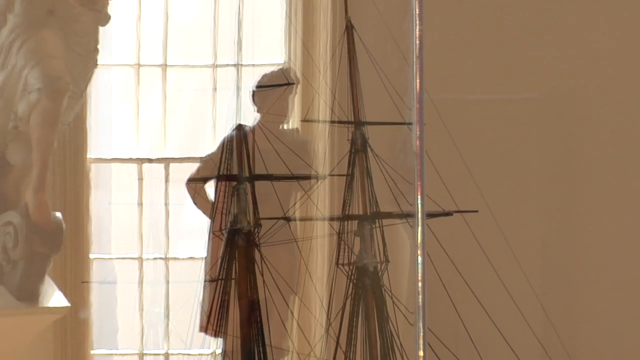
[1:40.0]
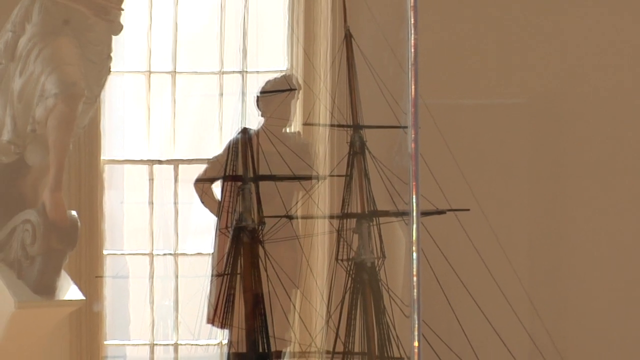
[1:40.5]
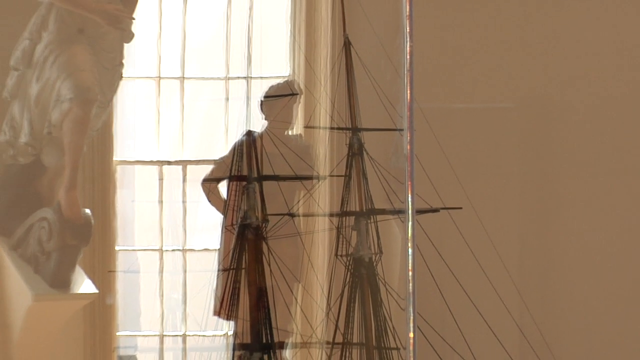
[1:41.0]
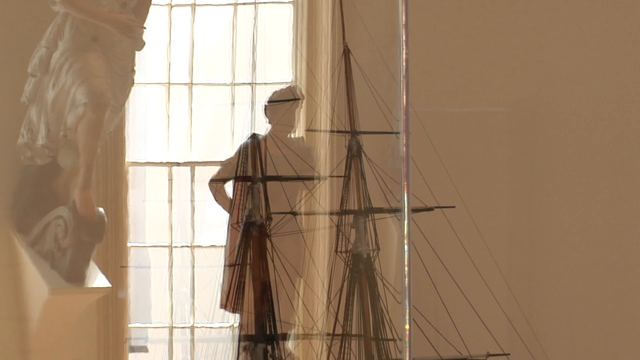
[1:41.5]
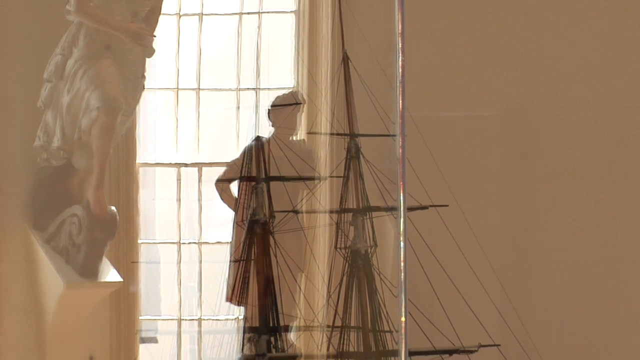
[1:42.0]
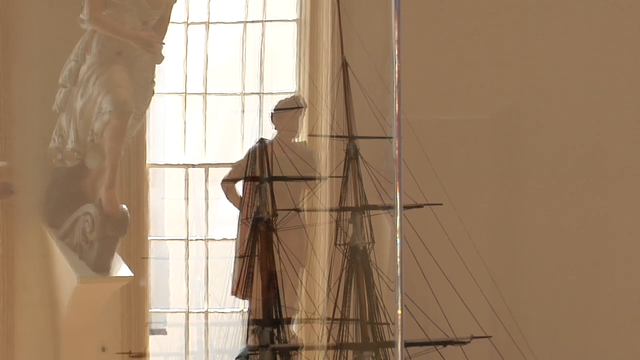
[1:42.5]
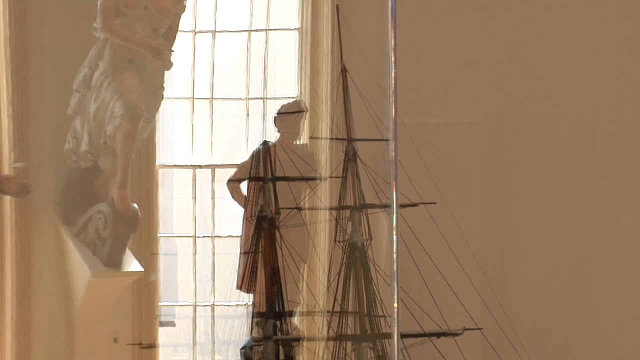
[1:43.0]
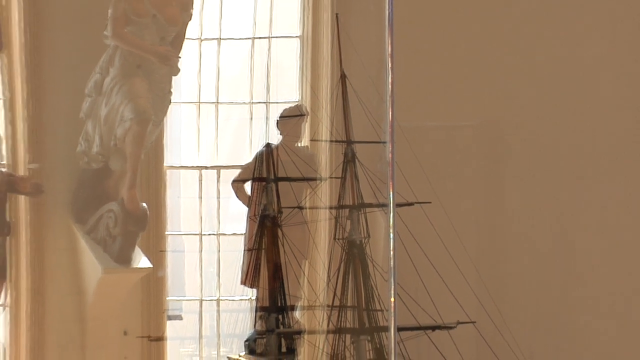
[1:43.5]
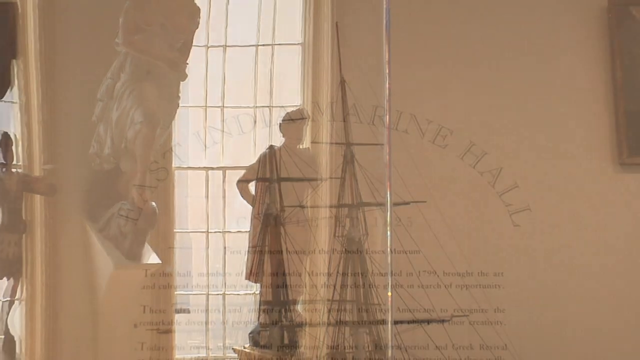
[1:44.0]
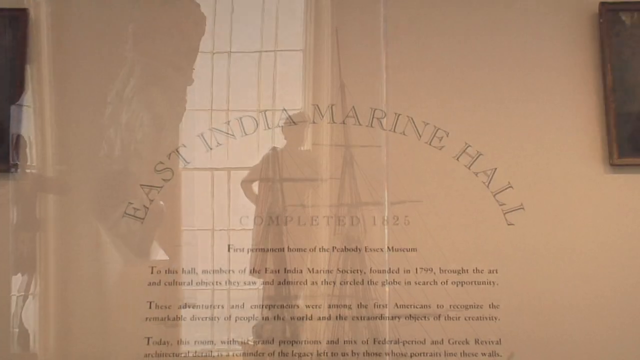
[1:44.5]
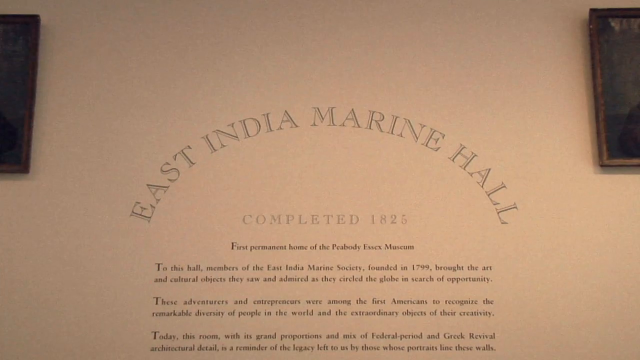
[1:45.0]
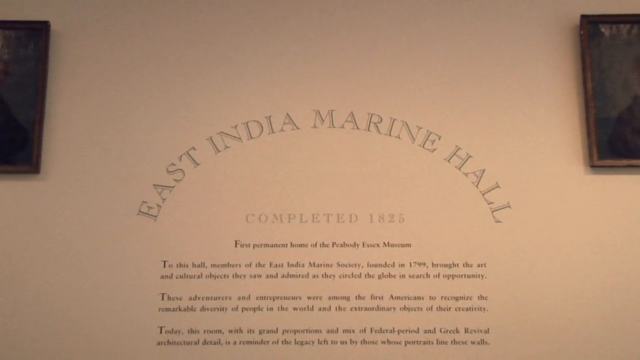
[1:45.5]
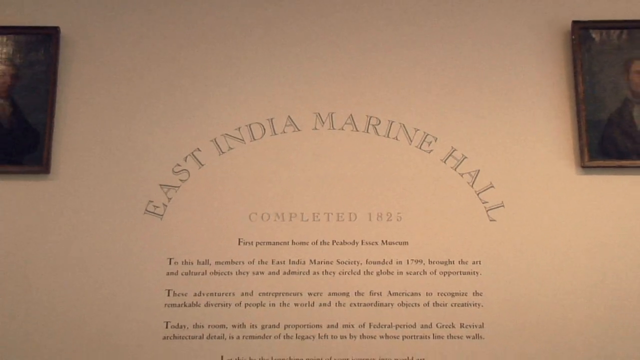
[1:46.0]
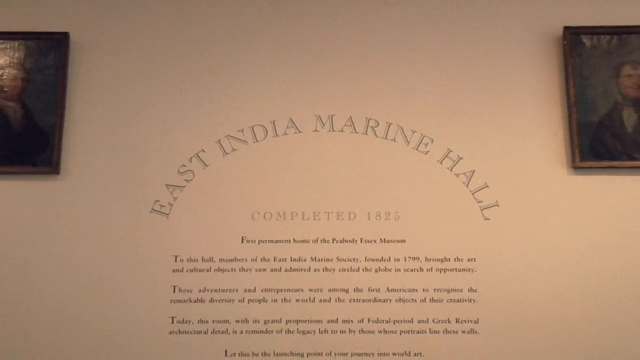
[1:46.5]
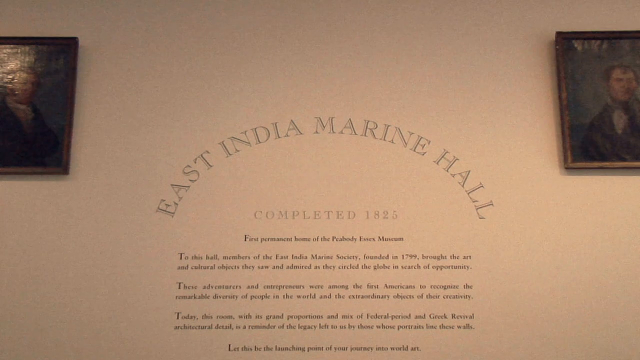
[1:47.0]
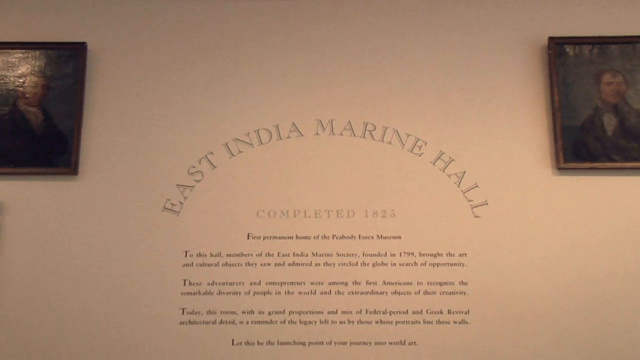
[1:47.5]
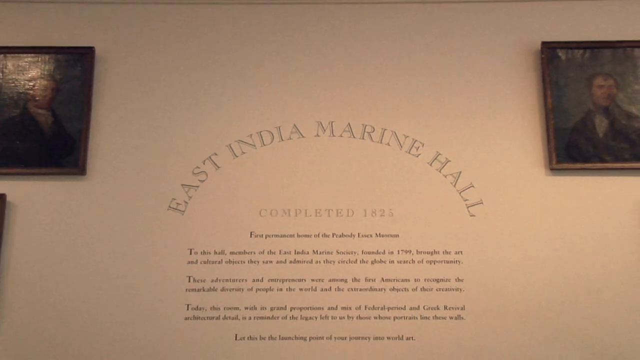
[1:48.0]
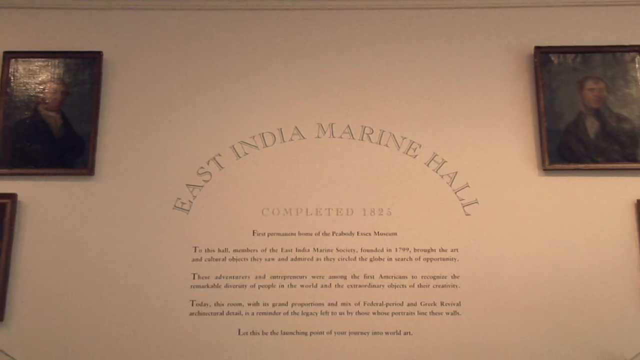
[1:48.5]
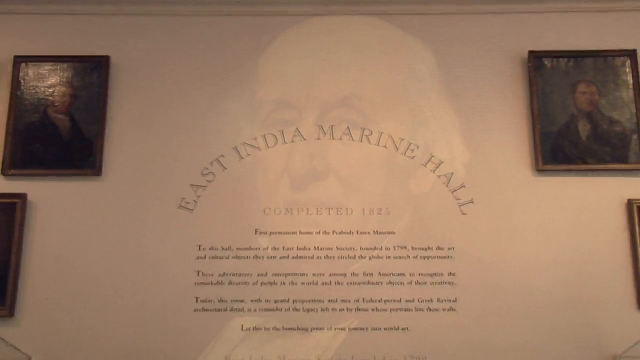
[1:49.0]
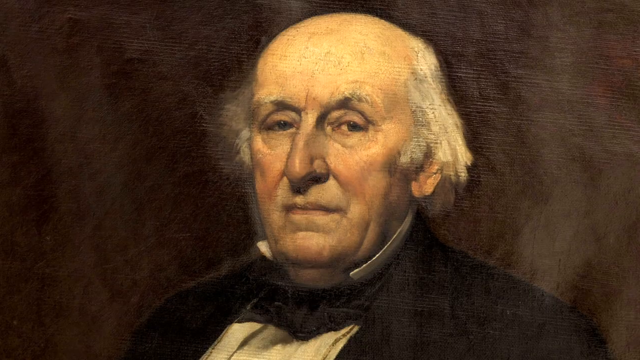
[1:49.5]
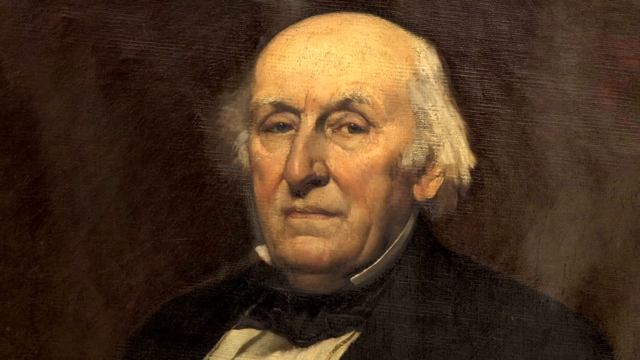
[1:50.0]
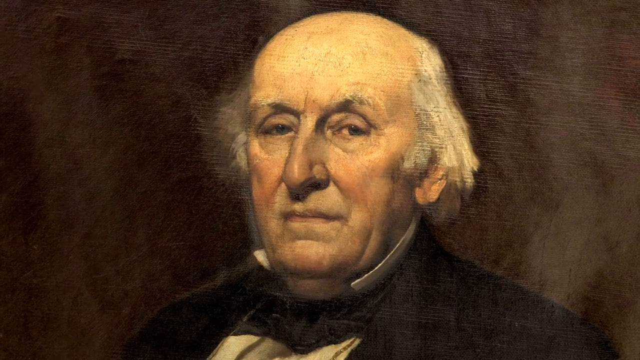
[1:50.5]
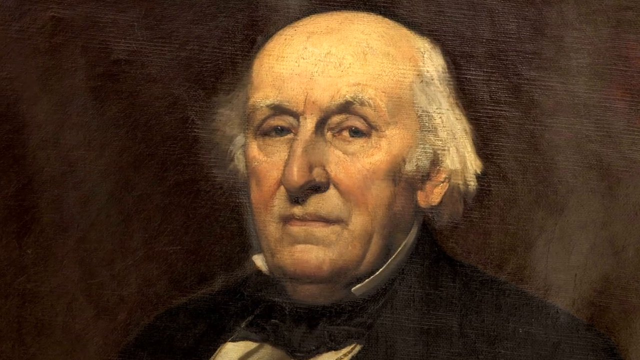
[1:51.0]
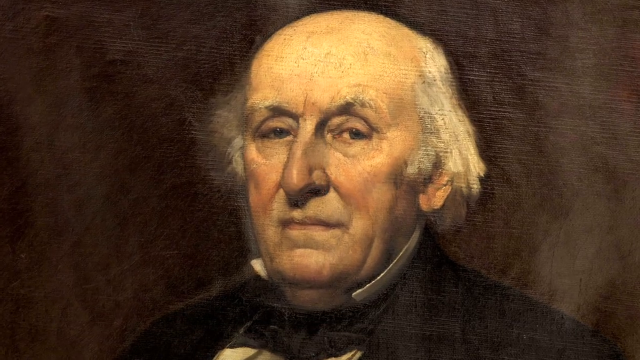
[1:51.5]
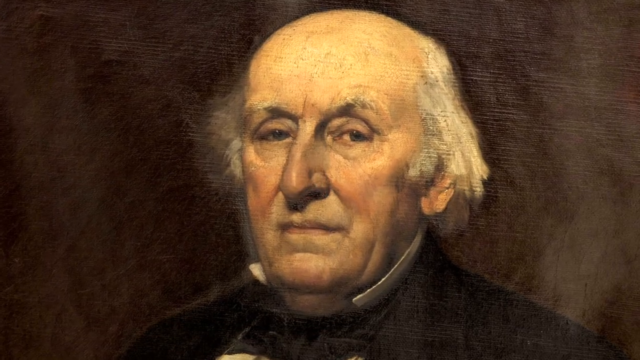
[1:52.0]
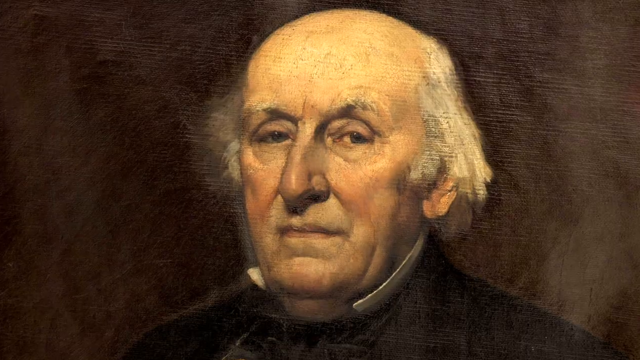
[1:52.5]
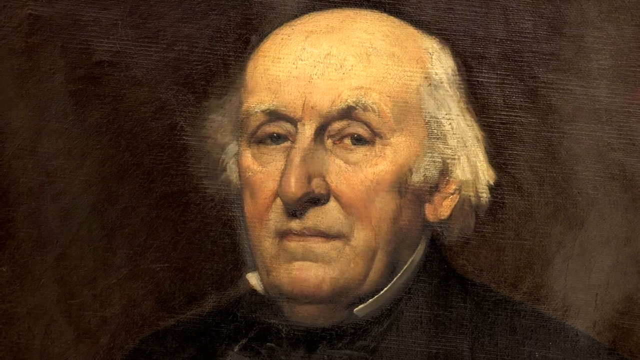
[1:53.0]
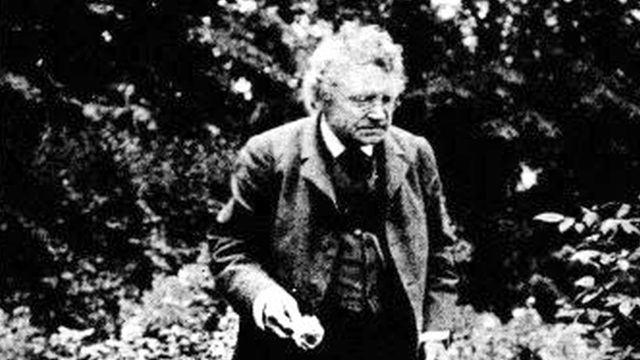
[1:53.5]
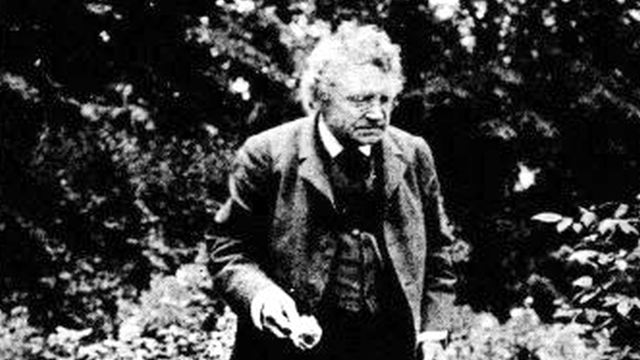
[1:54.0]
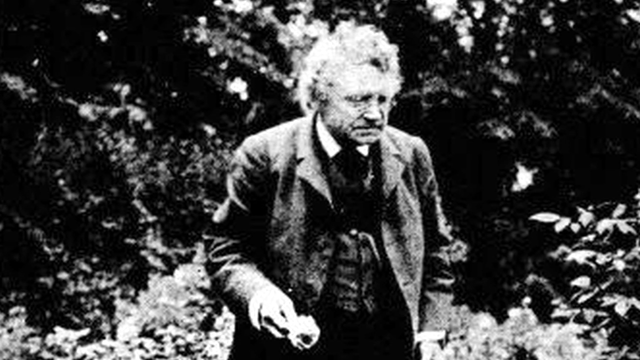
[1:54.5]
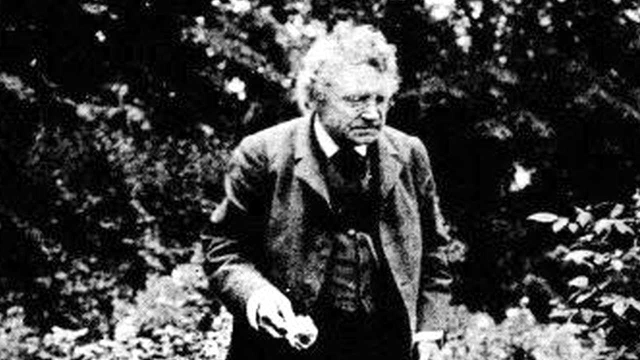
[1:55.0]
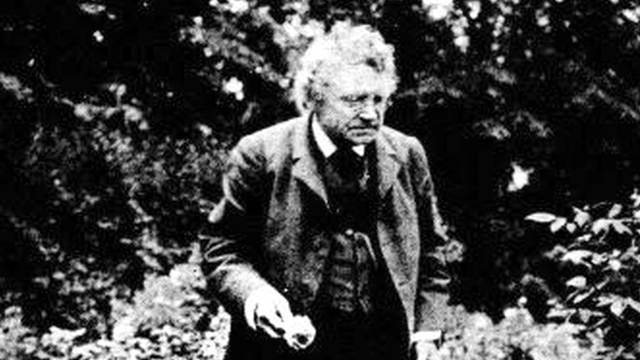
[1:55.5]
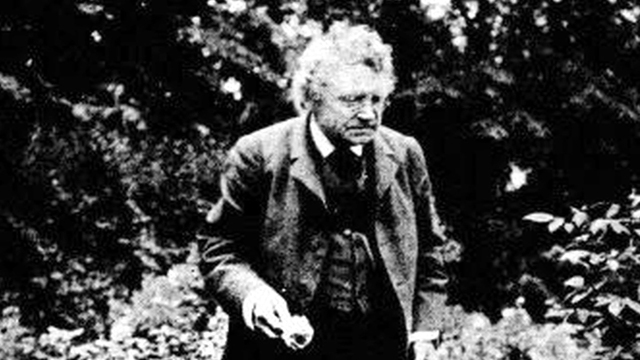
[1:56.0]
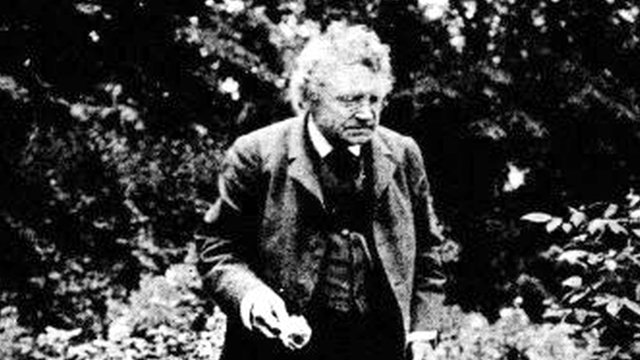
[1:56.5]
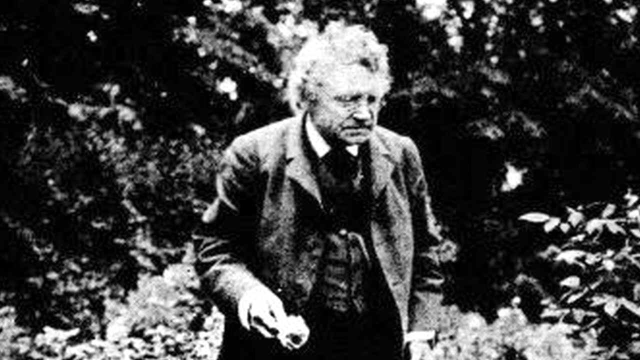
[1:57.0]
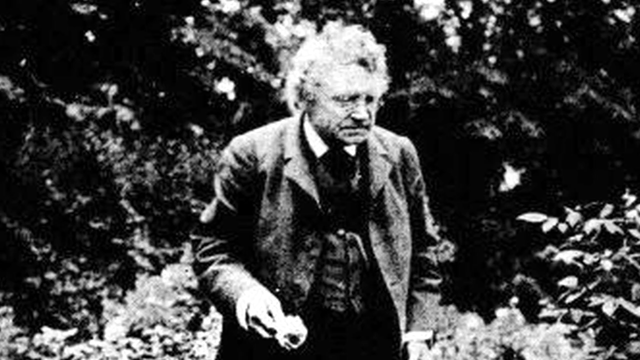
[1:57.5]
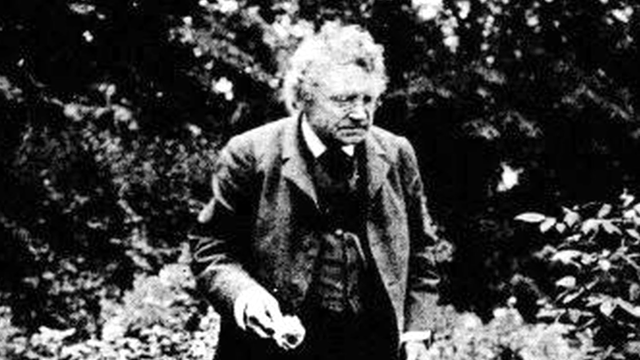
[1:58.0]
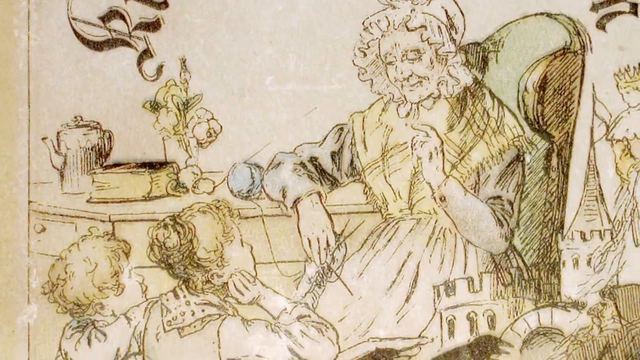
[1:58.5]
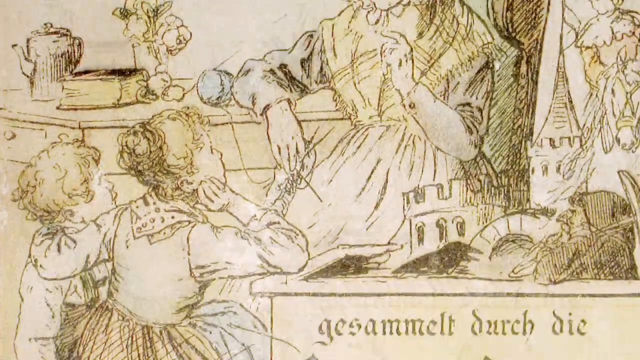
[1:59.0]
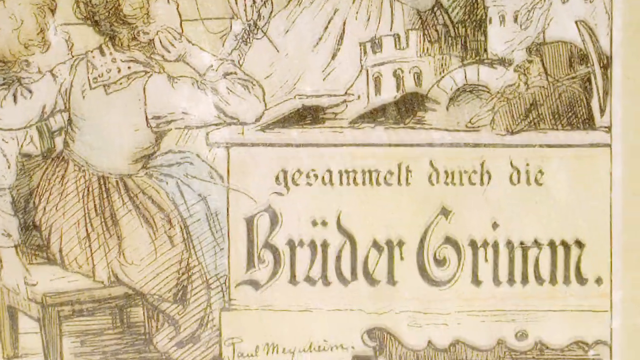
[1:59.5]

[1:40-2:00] In a double-exposed image, a single woman stands in a big open window on the left-hand side while a ship's mast comes in from the foreground, possibly as a double exposure. The video cuts to a white wall with text reading "East Indian Marine Hall, completed 1825," along with a lot of black text that zooms out too quickly to read, and some old-timey pictures around it. Next is a portrait of a bald, bigger white man on a black background, wearing black and looking stoic, with a fairly good-sized nose and brown eyes; the camera zooms in on his face. The video then cuts to an old black-and-white photo of a man standing in the center against what would be greenery, looking down toward the bottom right. He wears glasses and a suit and holds what looks like a flower in his right hand, on the viewer's left, while his other hand is down at his side. The video then cuts to what looks like a children's book whose title ends in "grim" and apparently is German.